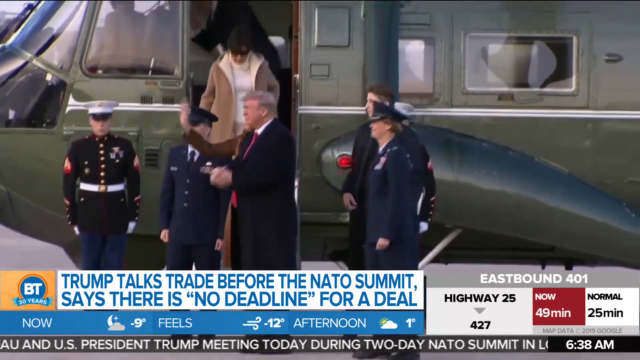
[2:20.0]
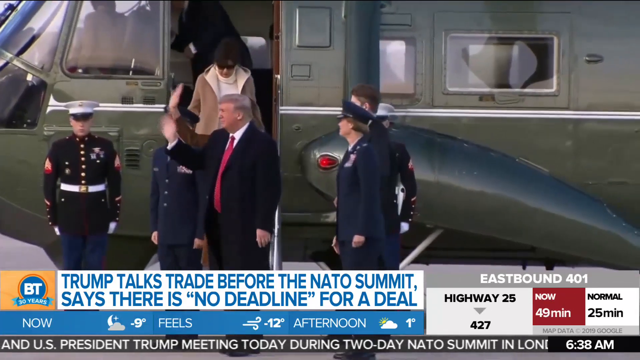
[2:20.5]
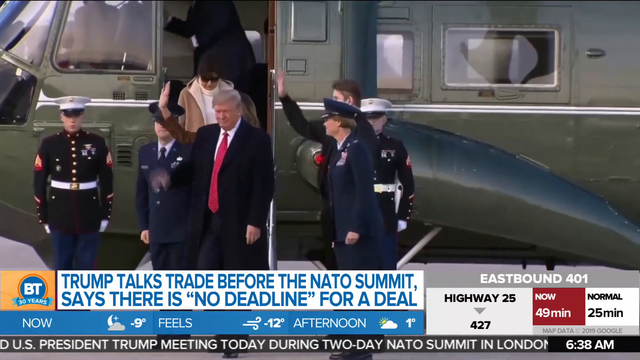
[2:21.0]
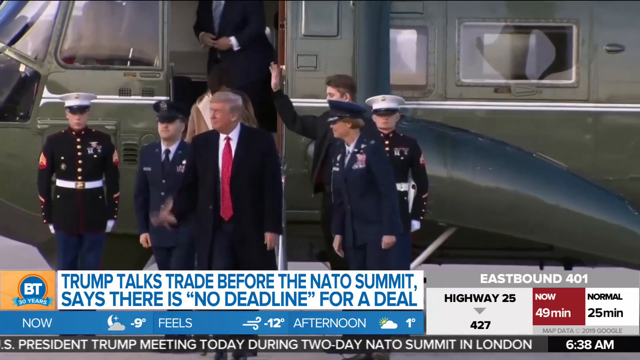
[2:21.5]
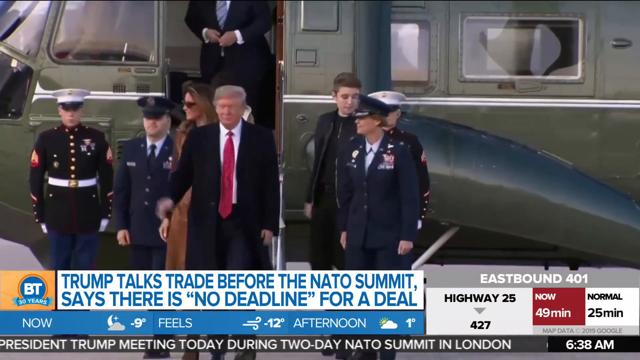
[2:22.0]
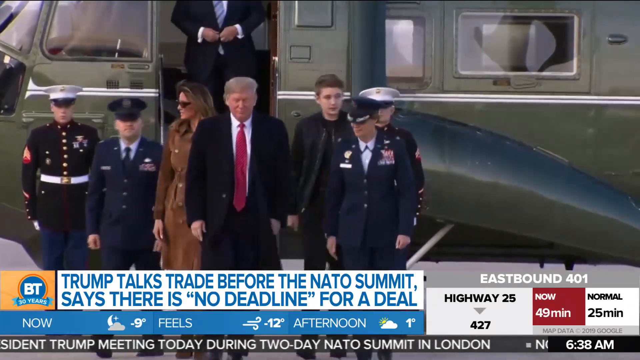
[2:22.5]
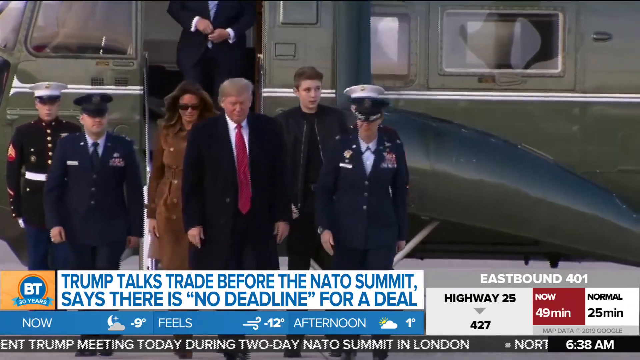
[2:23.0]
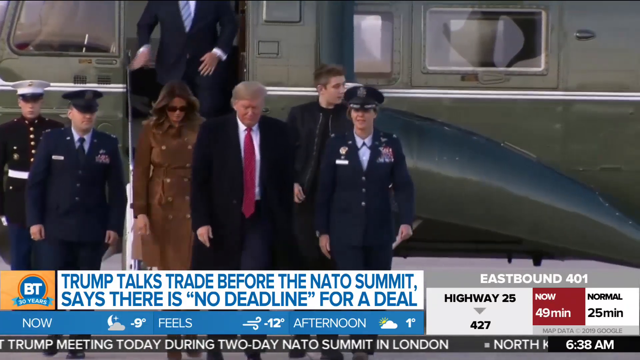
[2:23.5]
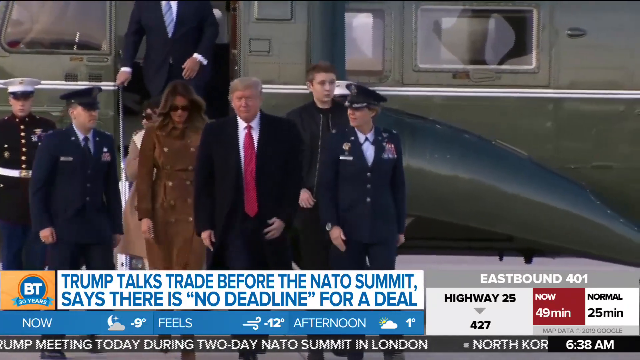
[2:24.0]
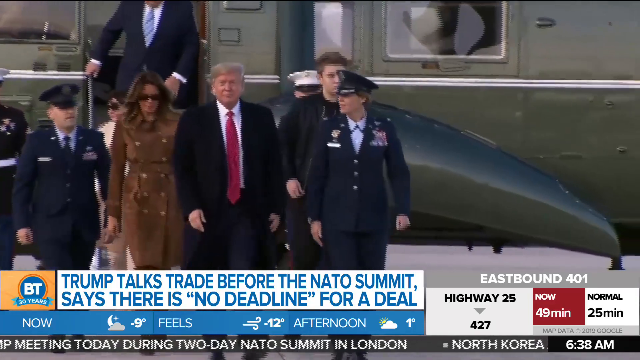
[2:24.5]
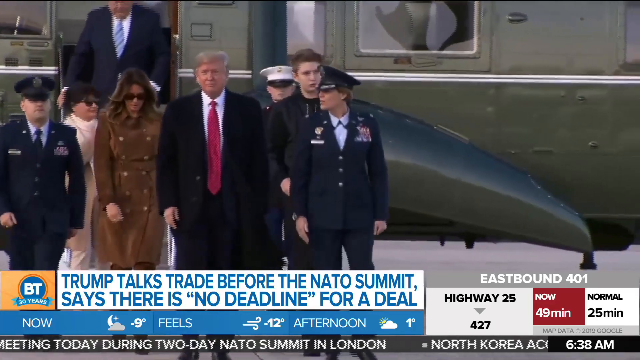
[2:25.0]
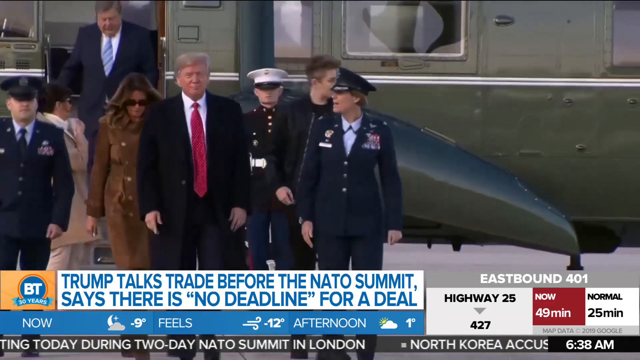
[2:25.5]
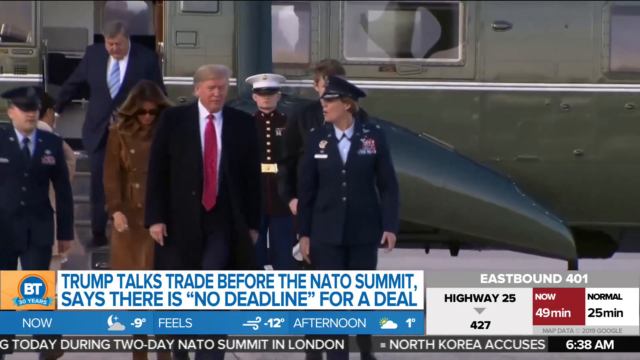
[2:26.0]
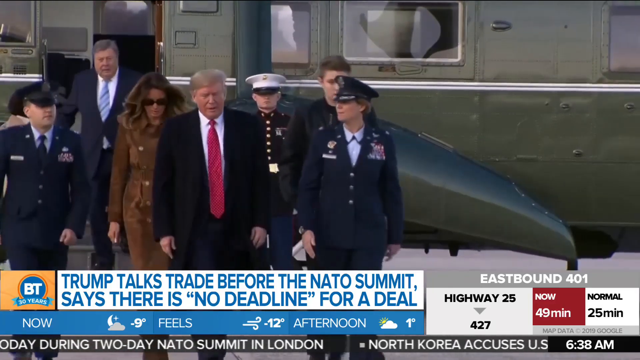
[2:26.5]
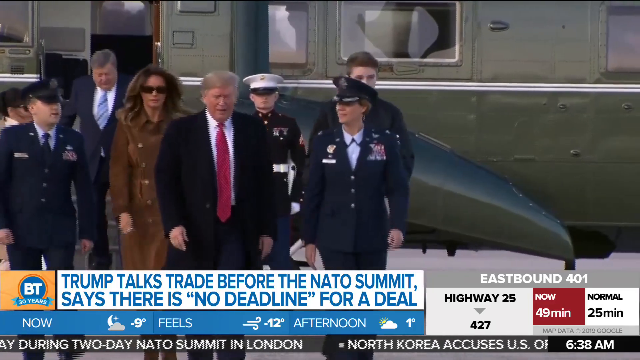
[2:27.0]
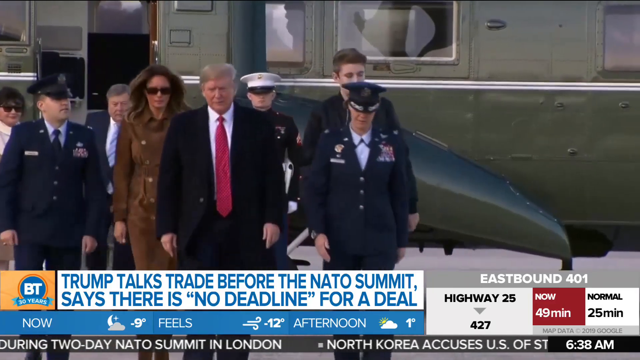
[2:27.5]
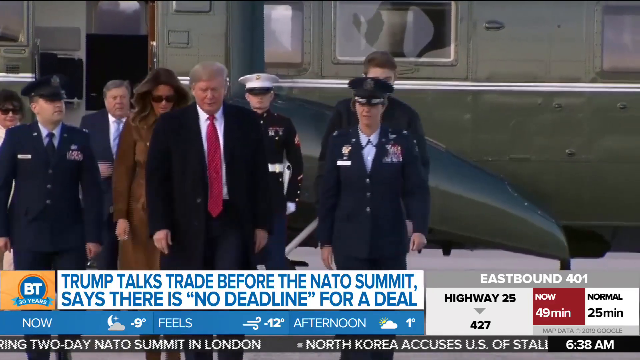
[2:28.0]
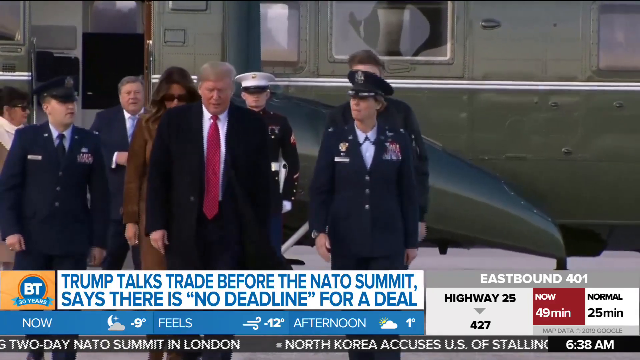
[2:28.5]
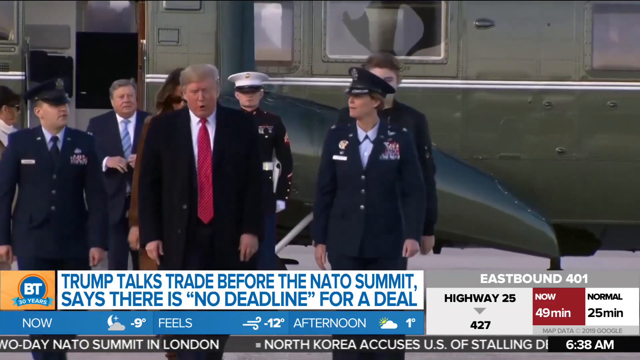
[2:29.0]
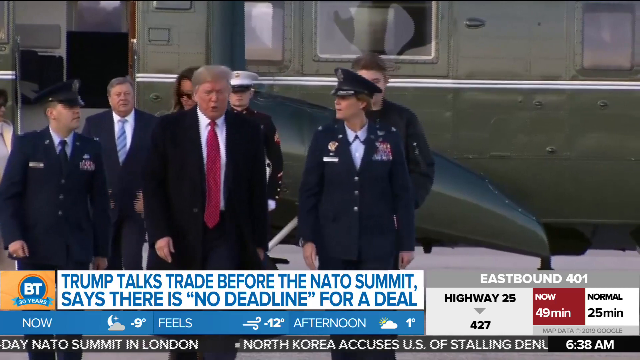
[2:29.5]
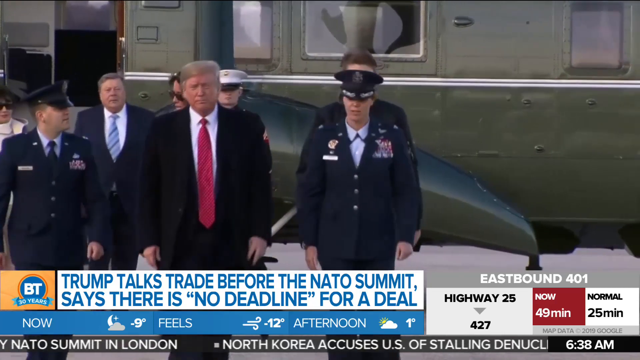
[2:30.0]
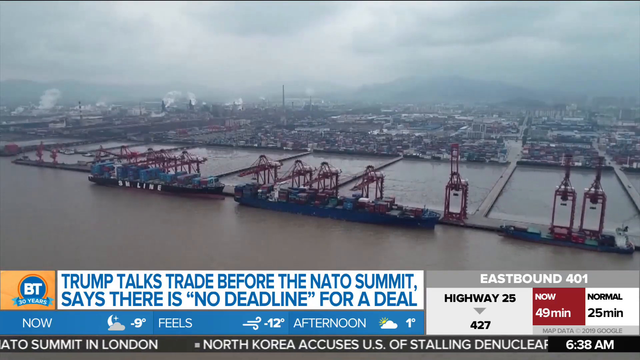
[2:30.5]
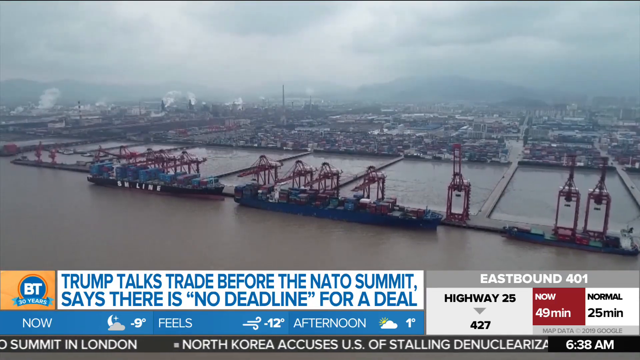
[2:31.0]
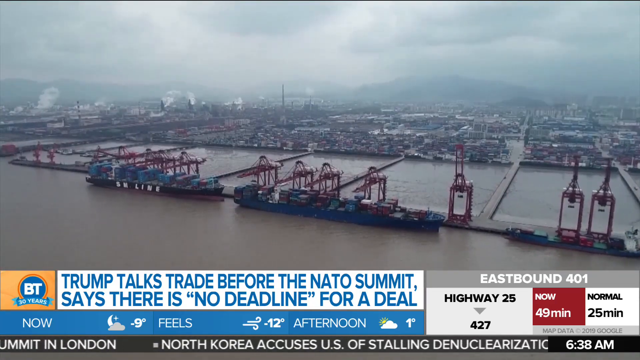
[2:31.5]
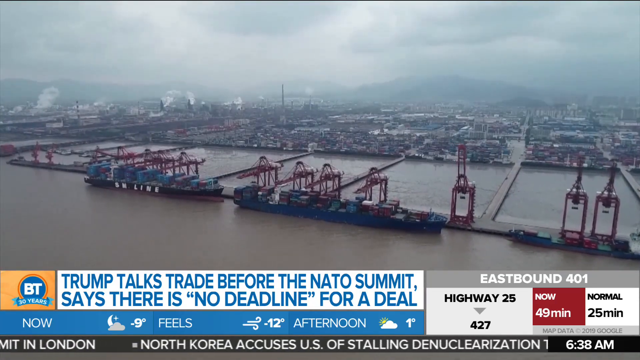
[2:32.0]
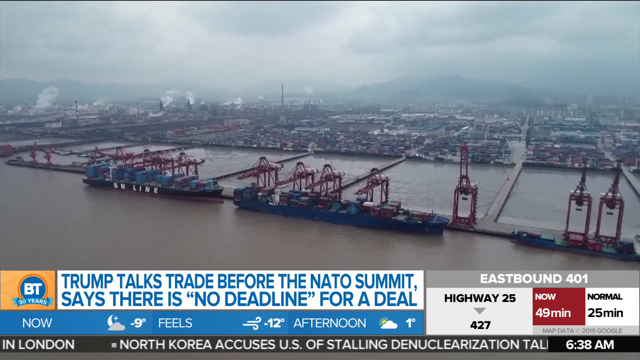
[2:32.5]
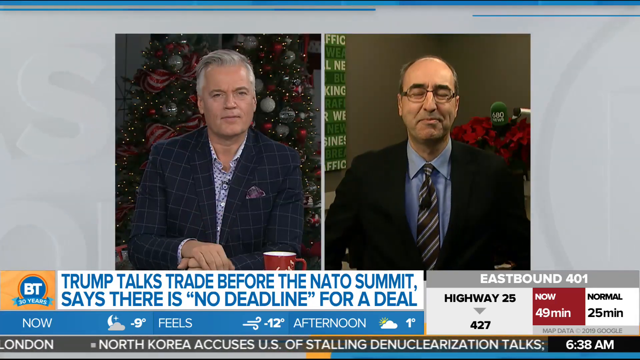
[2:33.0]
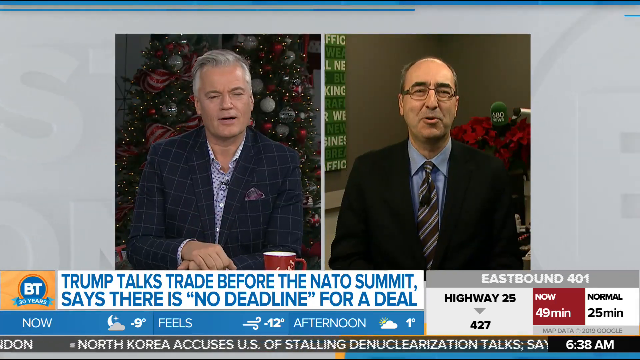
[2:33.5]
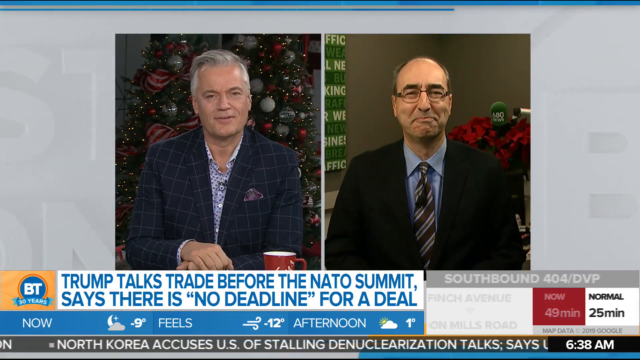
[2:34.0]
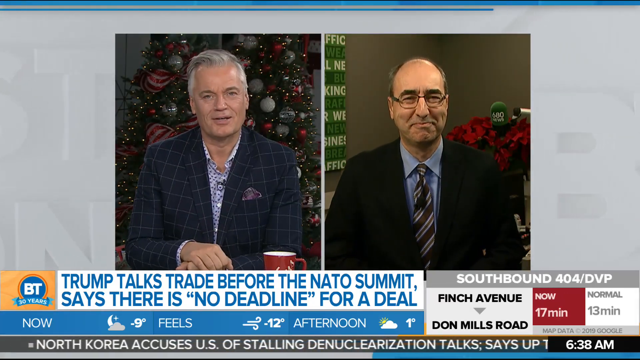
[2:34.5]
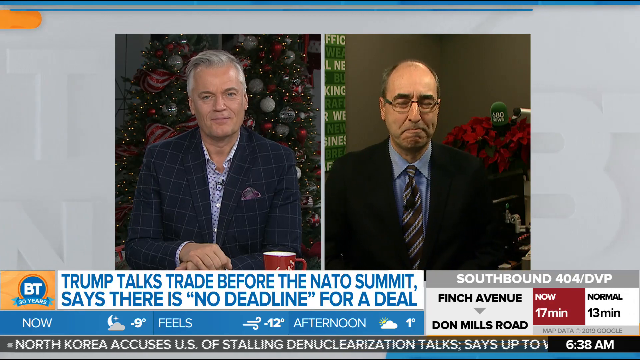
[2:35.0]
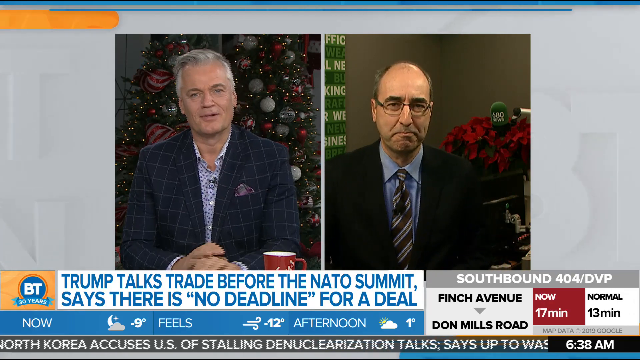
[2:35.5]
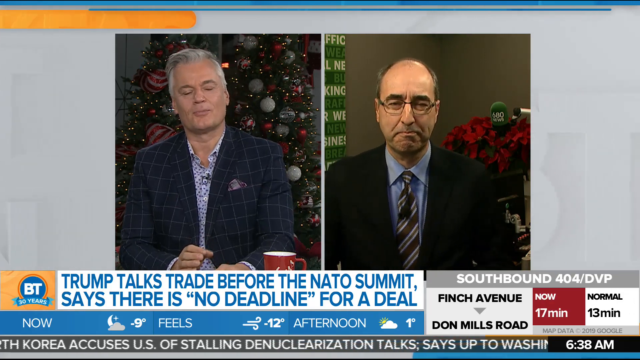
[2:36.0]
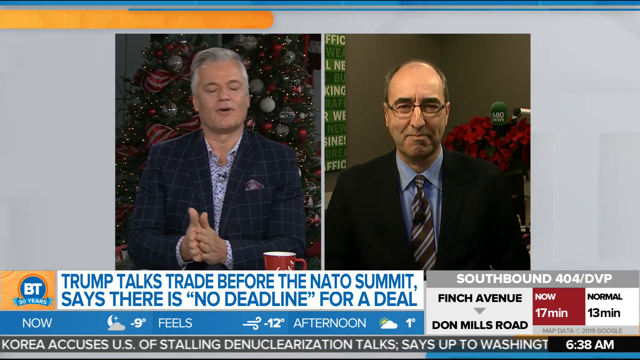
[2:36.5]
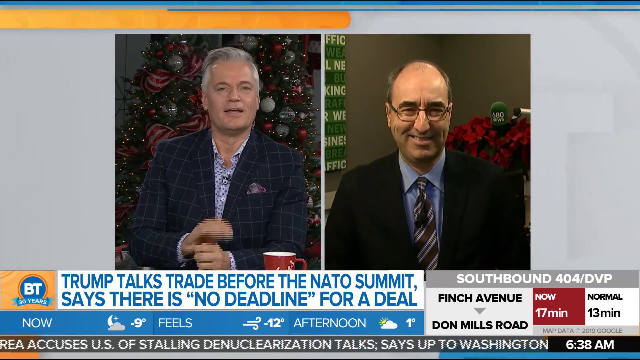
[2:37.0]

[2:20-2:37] A BT News segment shows a white rectangular box at the bottom of the screen reading "Trump talks trade before the NATO summit says there is no deadline for a deal." To the left of this box is a yellow box containing the BT symbol: white text "BT" in a blue circle with a red outline, and the words "30 years" in a blue banner at the bottom. Below, a weather forecast for today runs along the bottom of the screen, and on the right side a gray and white box shows a traffic update for eastbound 401. The video above shows Donald Trump standing in front of a green helicopter, with servicemen, Marines, standing behind him and to his right. Trump wears a red tie, white shirt, and black suit, and he waves while looking to his right. His son, to his right, also looks to the right and waves. Behind Trump is his wife in a brown dress, and Barron wears a black coat and black jeans. The family walks down toward the camera, with service people on the left and right. Next, an aerial shot shows what looks like docks, with two large boats carrying storage containers, a city in the background, and tall towers releasing smoke in the top left. The video returns to the news studio split screen with two newscasters. The one on the right is balding and wears glasses, a black suit, a blue shirt, and a striped black and white tie. The one on the left has gray hair combed to his right side and sits in front of a Christmas tree, wearing a black suit with white pinstripes and a white shirt with black polka dots; he rests his right hand on his left hand in front of him. The man on the left rubs his hands together and then puts his right hand on his left hand, which is making a fist.